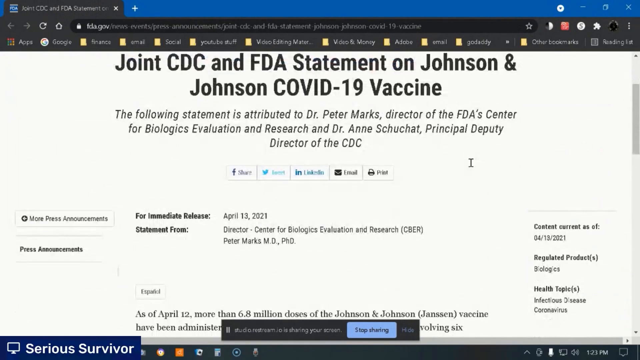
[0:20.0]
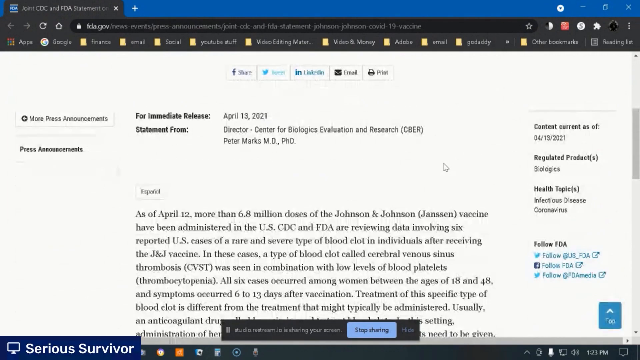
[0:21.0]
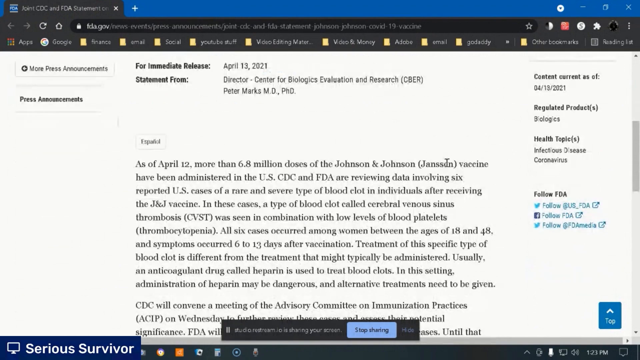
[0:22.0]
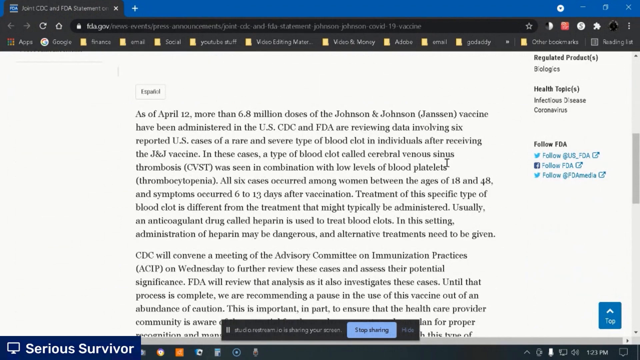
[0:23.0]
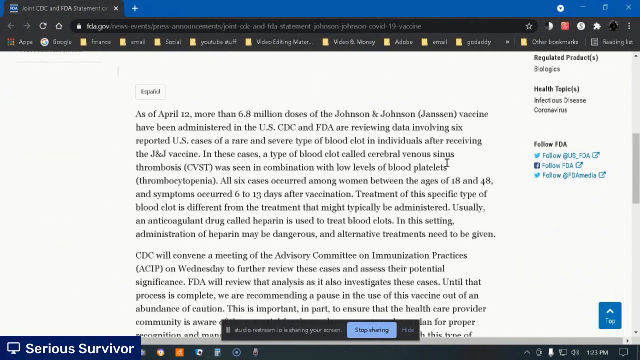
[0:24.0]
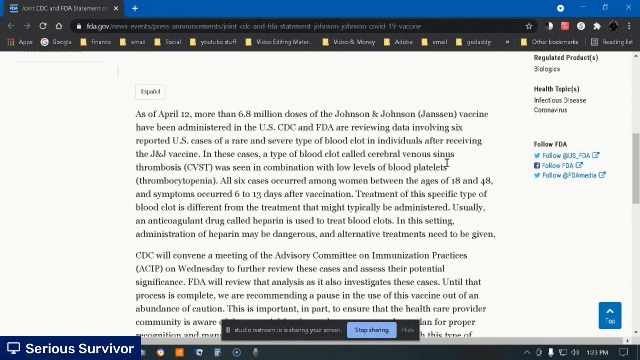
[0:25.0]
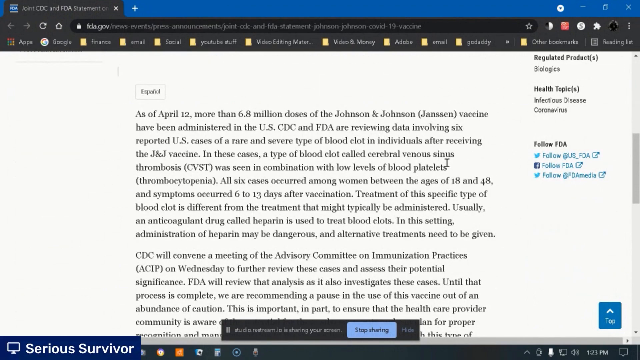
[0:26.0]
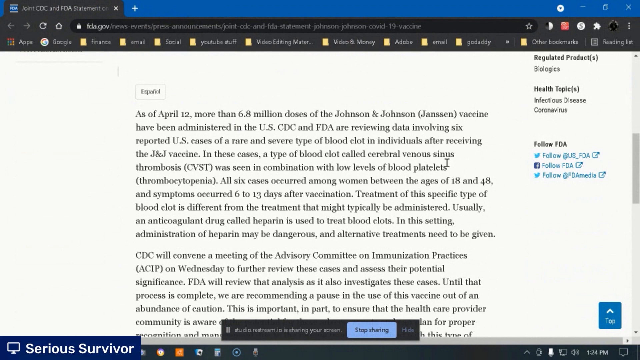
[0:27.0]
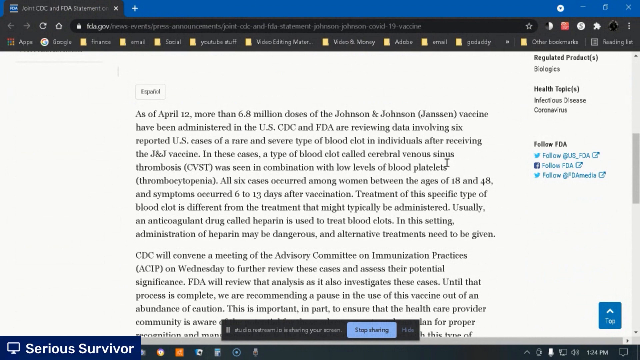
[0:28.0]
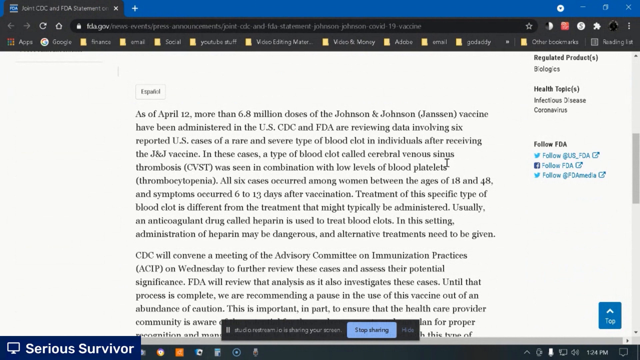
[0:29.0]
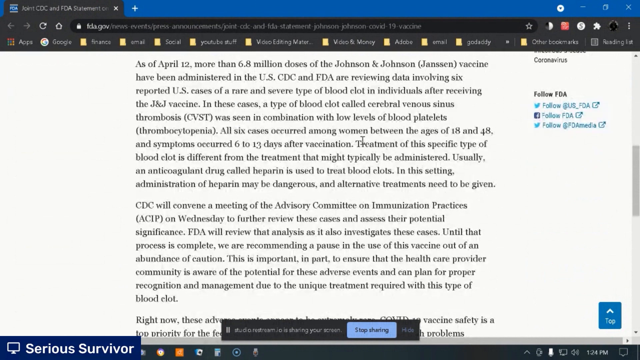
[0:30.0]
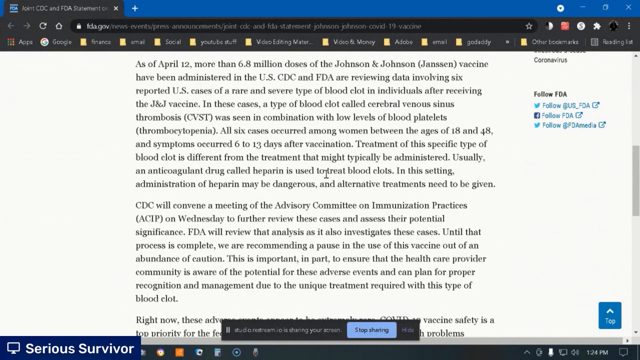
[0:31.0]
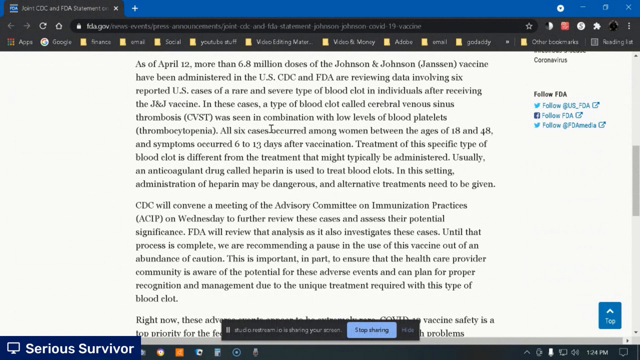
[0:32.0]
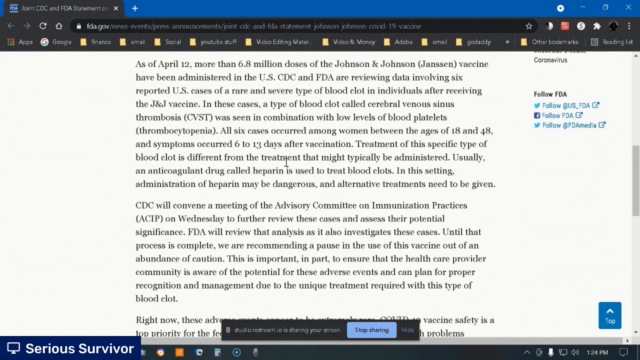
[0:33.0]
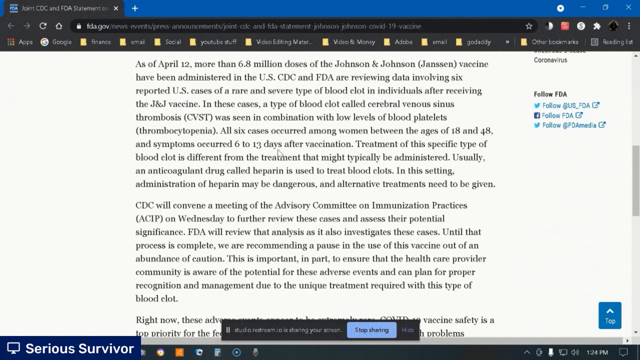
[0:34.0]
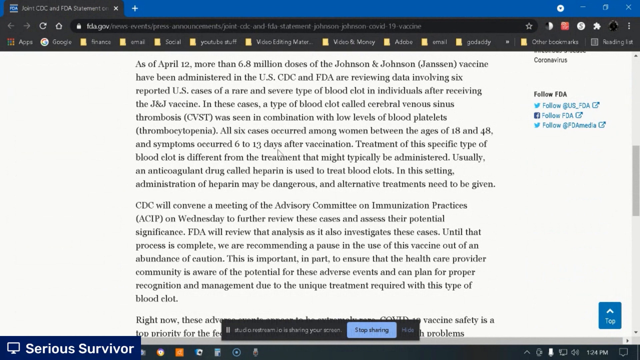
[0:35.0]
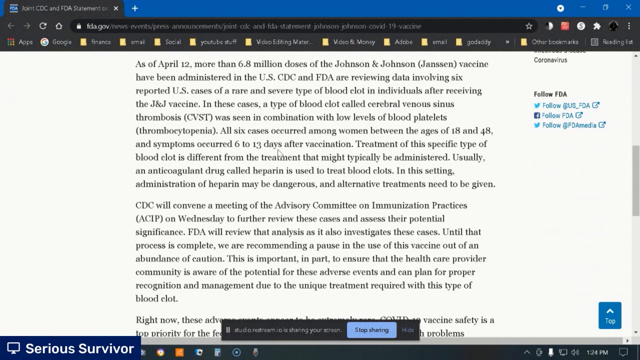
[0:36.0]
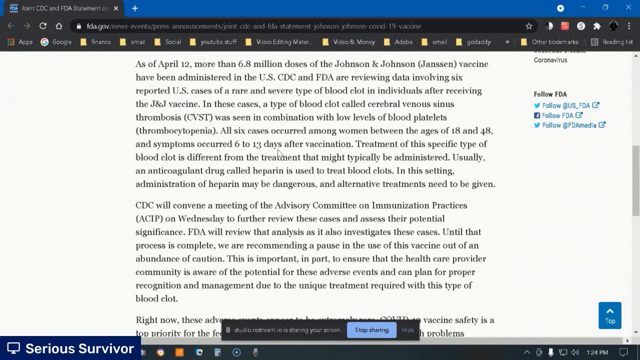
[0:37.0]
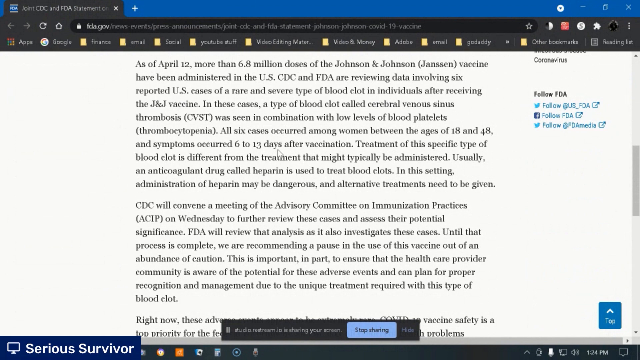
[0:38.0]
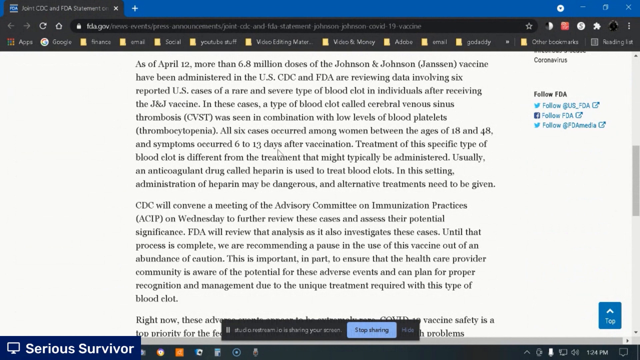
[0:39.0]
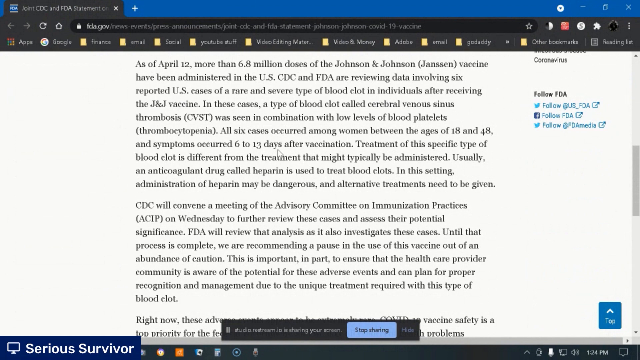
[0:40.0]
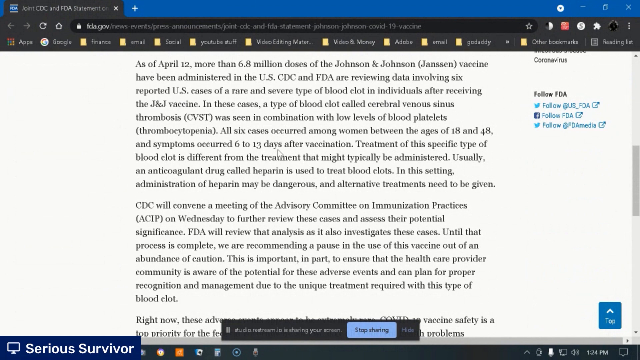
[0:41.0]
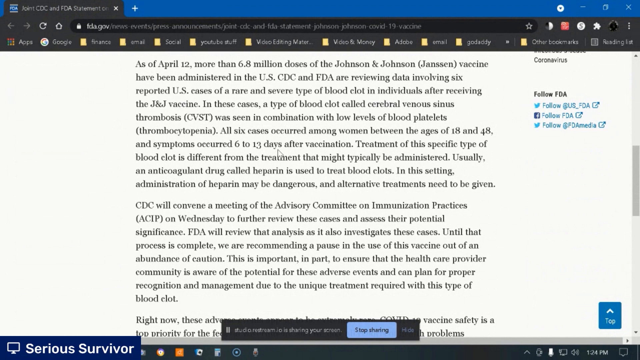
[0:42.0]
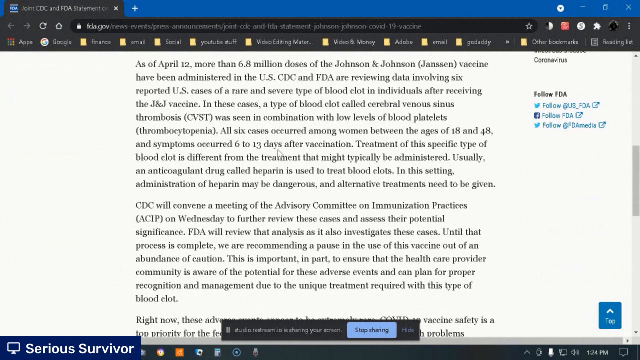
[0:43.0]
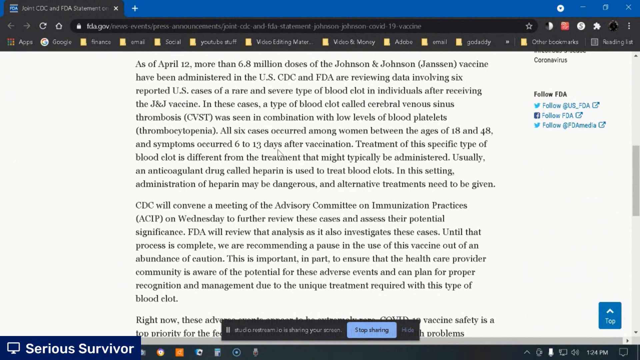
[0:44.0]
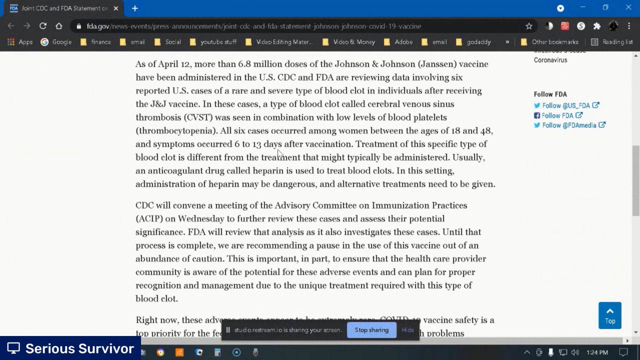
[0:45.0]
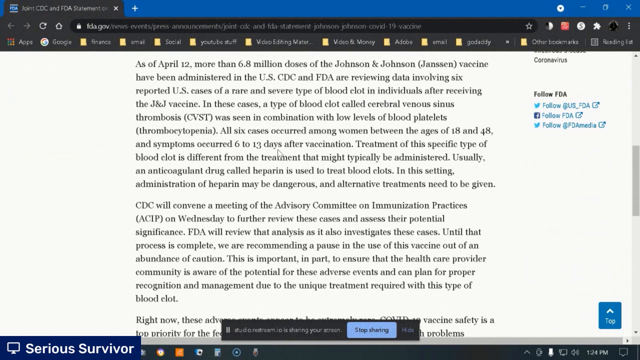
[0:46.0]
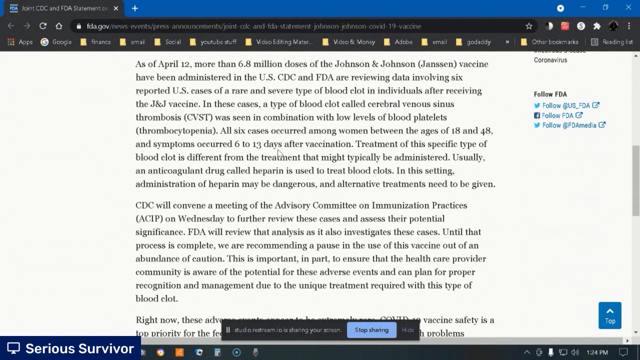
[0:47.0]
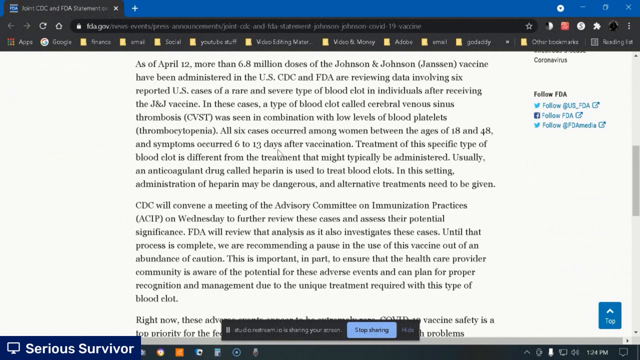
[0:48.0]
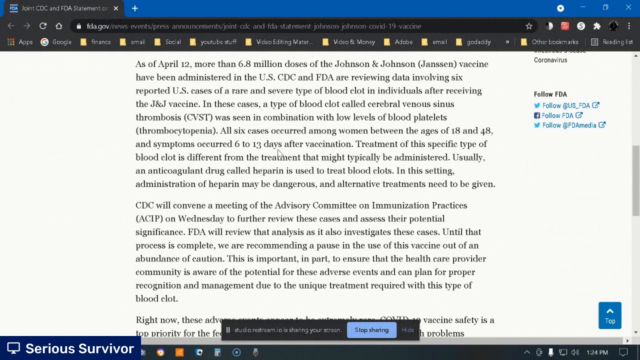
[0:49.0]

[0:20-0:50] The screen shows a "joint CDC and FDA statement on Johnson & Johnson's COVID-19 vaccine." It reads "The following statement is attributed to Peter Marks, director of the FDA's Center for Biological Evaluation Research, and Dr. Anshu Tathag, principal deputy director of the CDC." There are items from Twitter, Facebook and similar sites, a release date of "April 13, 2021," and the words "director of the Center for Biologics Evaluation," along with a lot of other information. The article appears to be about Johnson & Johnson vaccines administered in the U.S. and the review of some data, with something about six cases occurring. The man is going through the article.